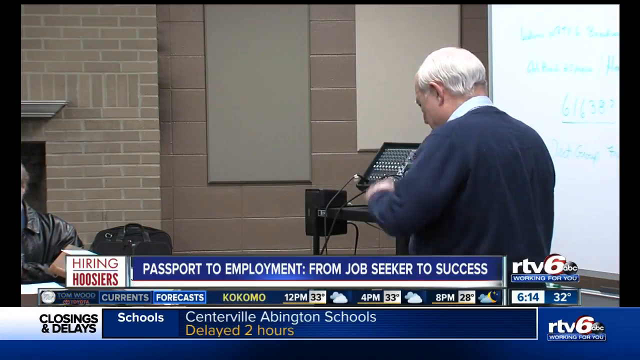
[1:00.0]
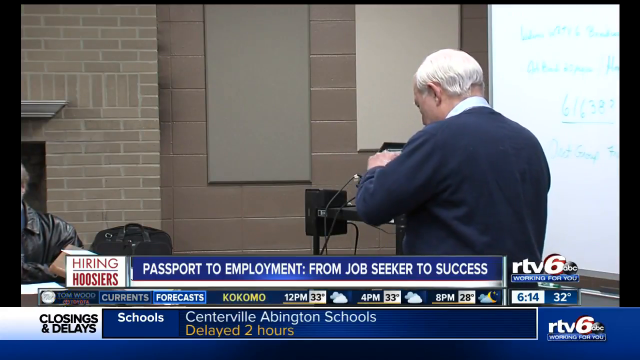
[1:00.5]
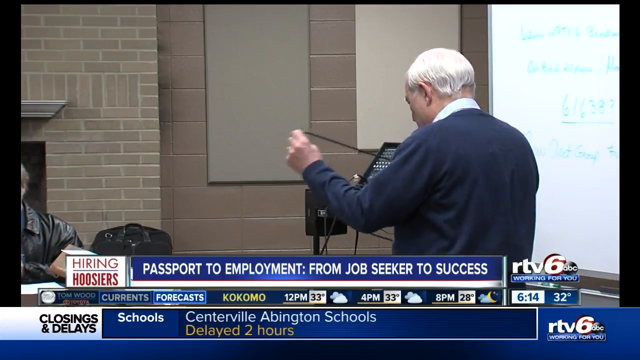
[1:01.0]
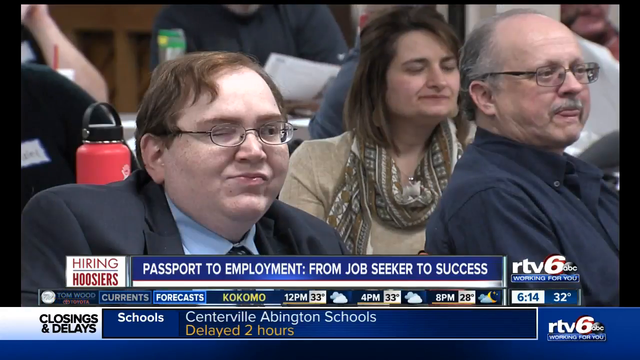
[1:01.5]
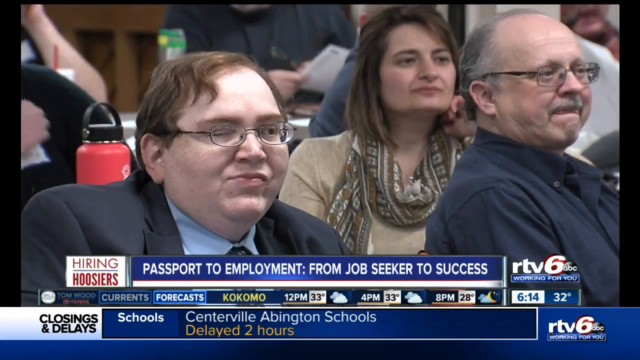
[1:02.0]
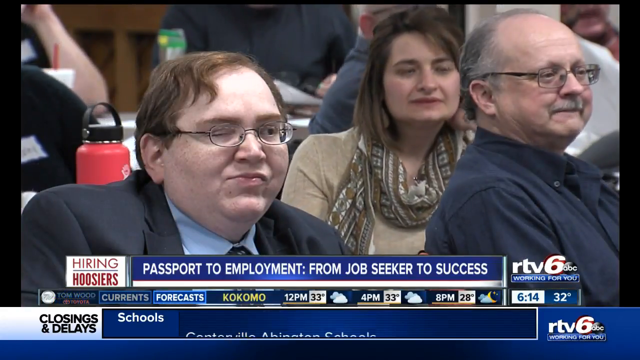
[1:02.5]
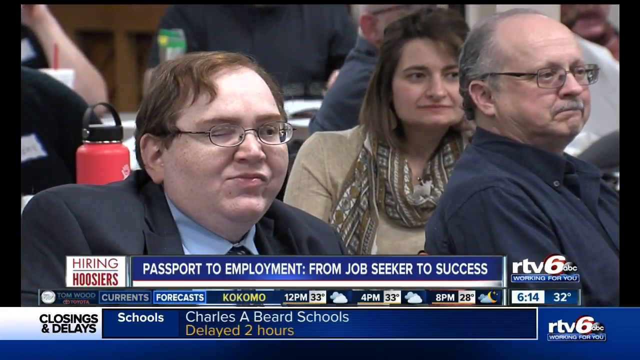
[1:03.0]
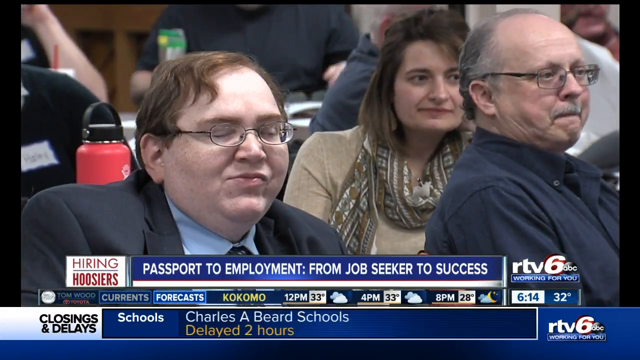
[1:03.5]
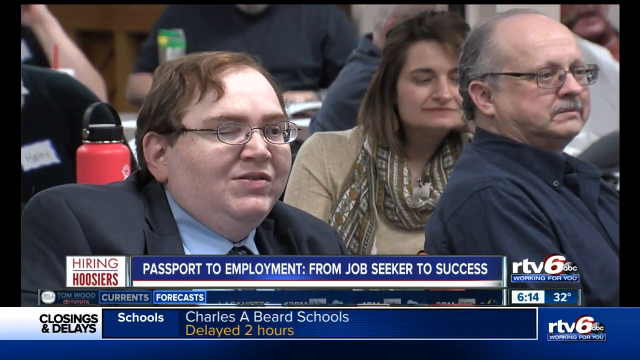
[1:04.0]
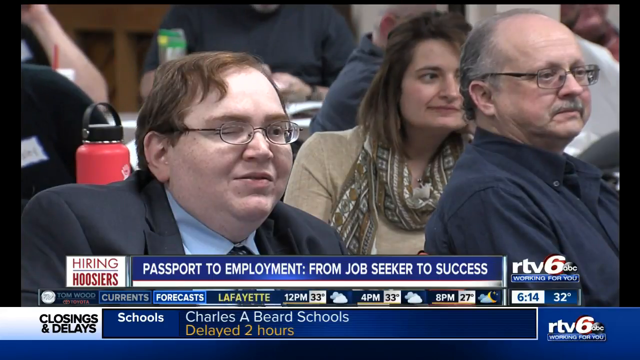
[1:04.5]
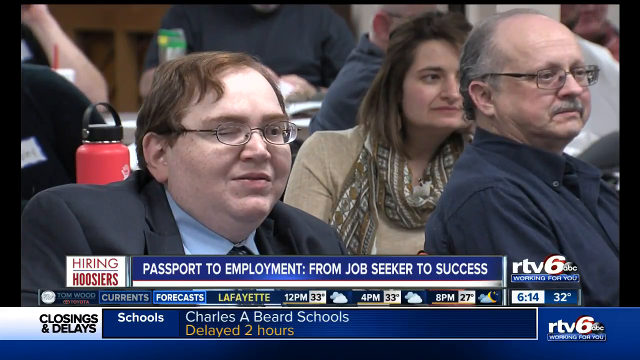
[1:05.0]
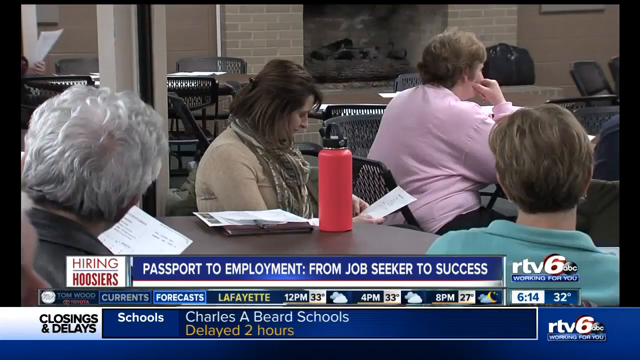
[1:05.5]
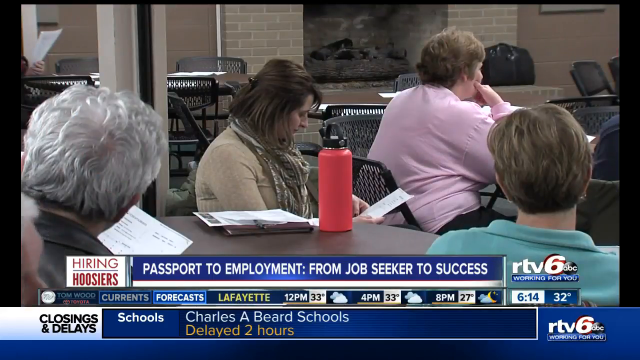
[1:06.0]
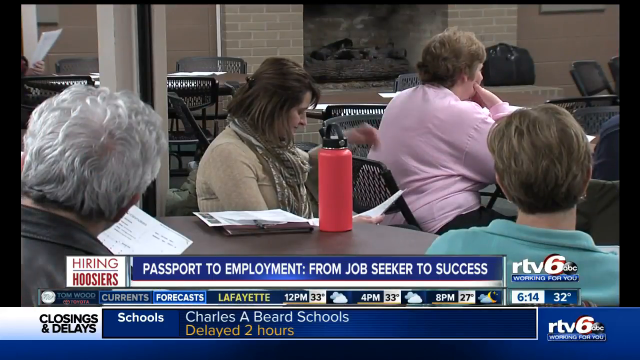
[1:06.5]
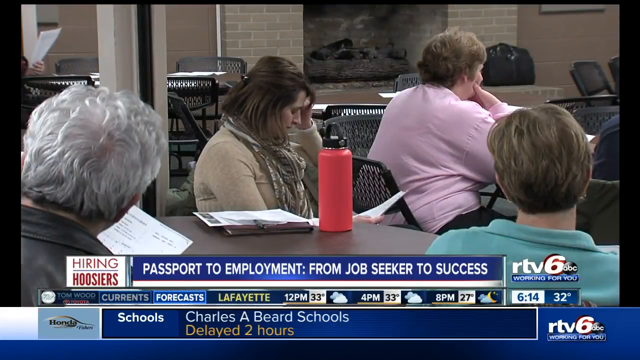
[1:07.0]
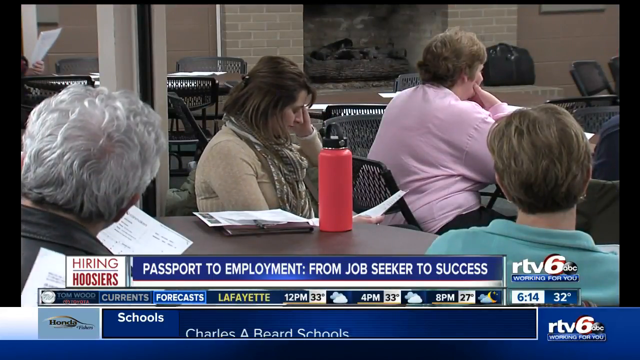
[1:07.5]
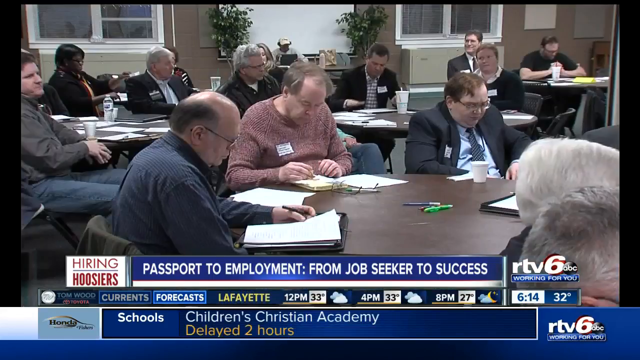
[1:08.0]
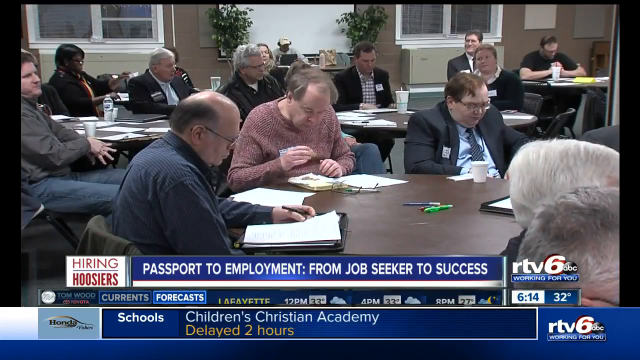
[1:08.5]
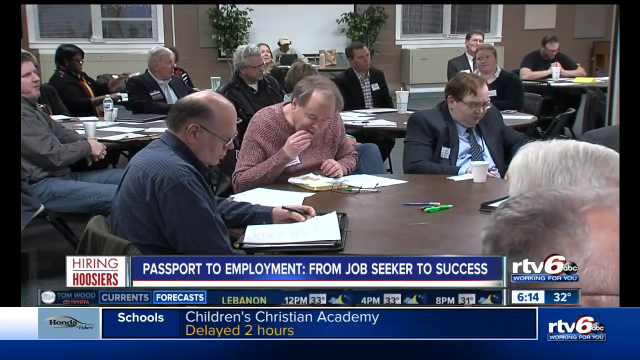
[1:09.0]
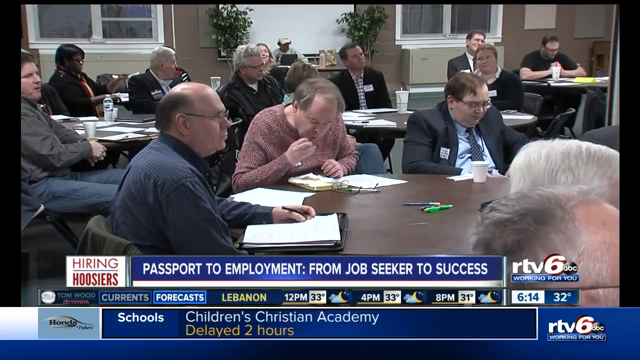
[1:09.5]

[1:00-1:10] A man pulls a wire out of something. The camera pans around the room, showing the people; some are eating, and many have beverages in front of them. They appear to be waiting for the man at the front to connect the wire so the class can continue. Seen from behind, the white-haired man appears to wear a toupee, since at the bottom it does not quite cover his hairline and dark hair shows.